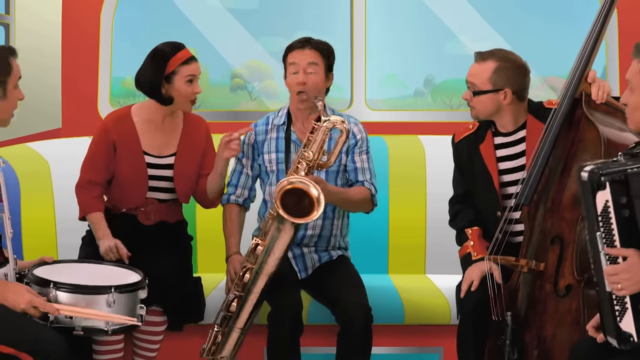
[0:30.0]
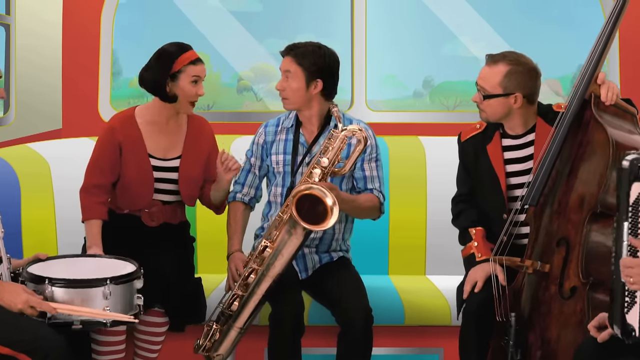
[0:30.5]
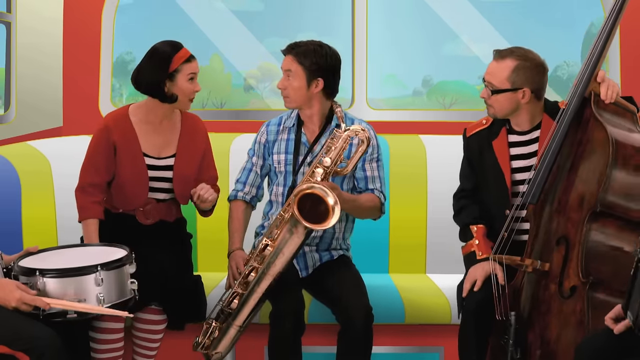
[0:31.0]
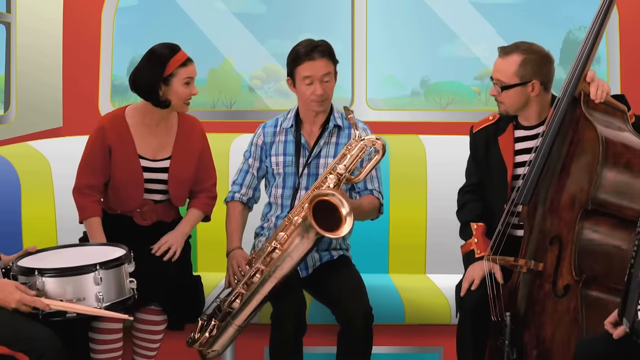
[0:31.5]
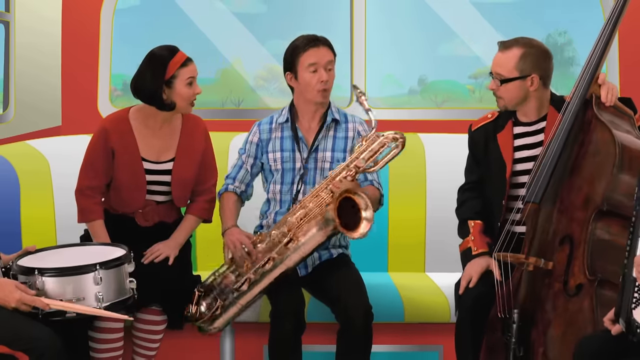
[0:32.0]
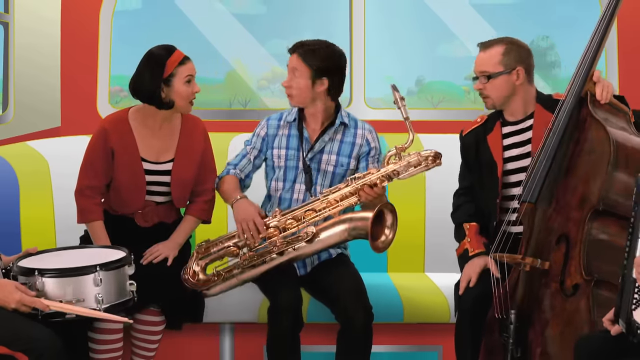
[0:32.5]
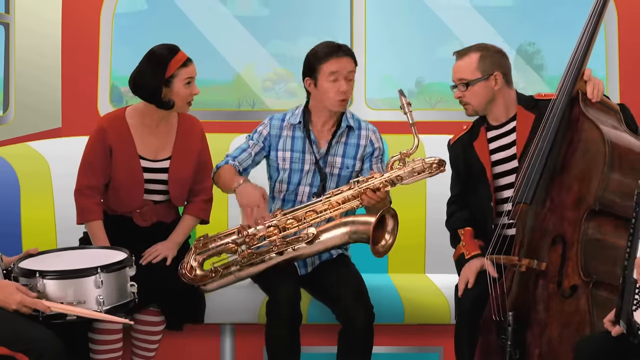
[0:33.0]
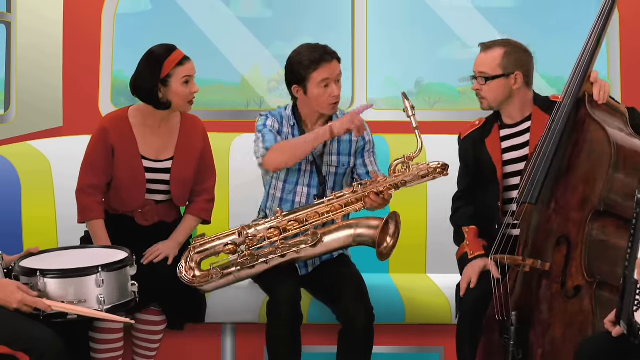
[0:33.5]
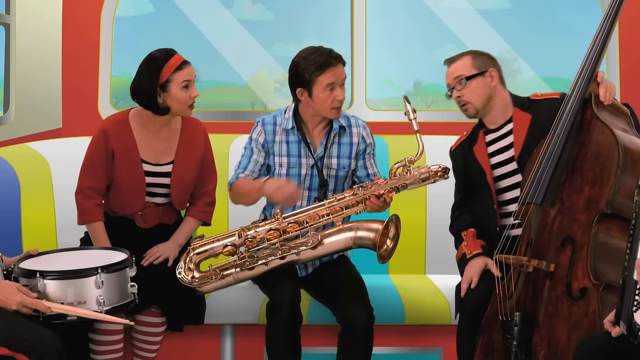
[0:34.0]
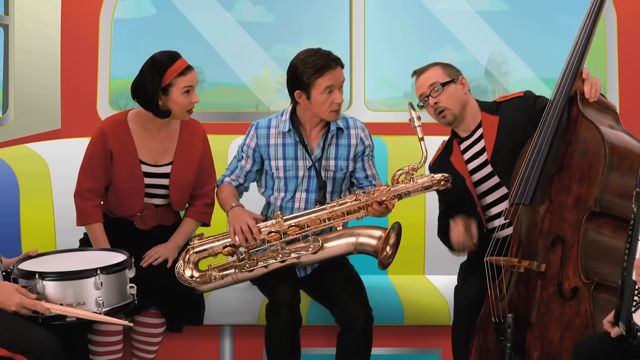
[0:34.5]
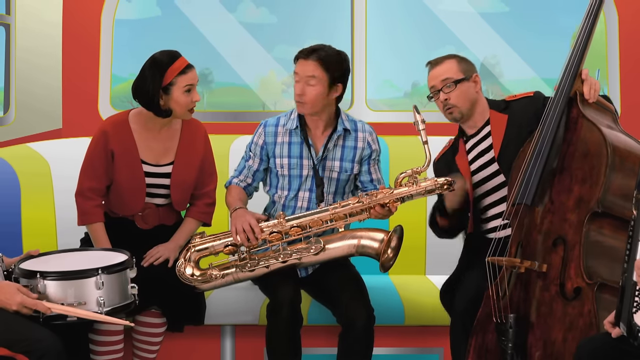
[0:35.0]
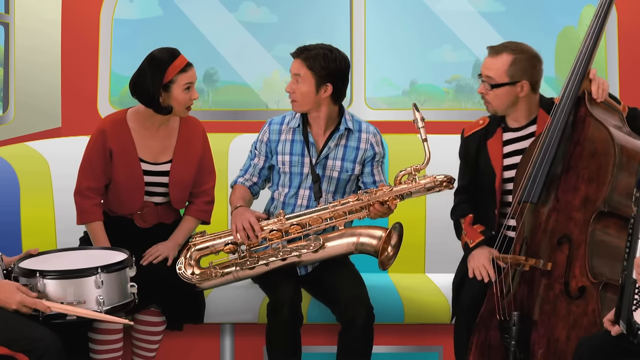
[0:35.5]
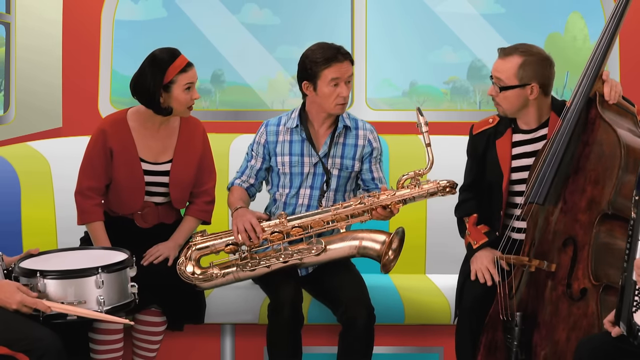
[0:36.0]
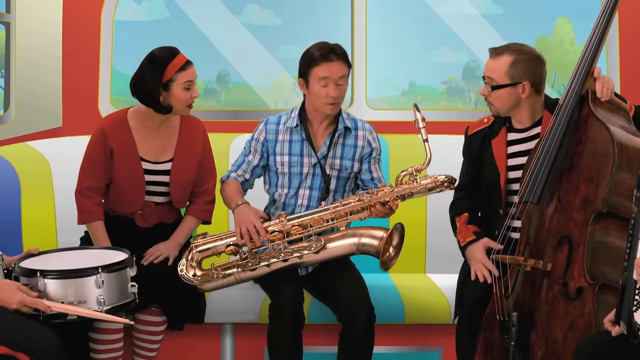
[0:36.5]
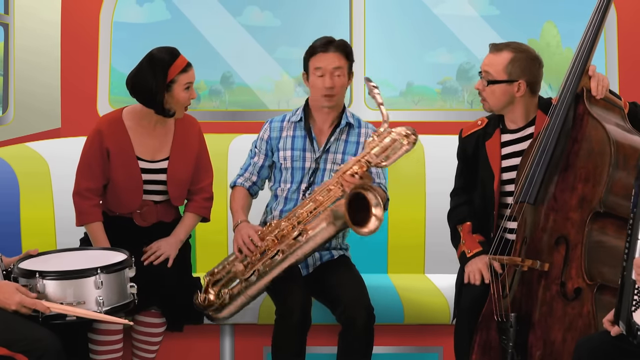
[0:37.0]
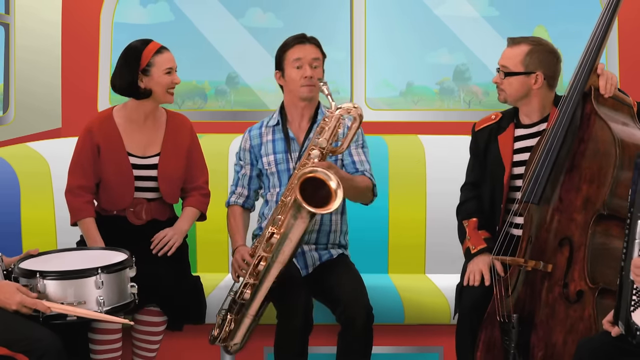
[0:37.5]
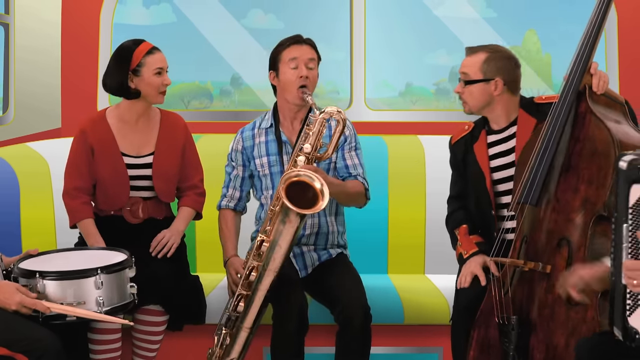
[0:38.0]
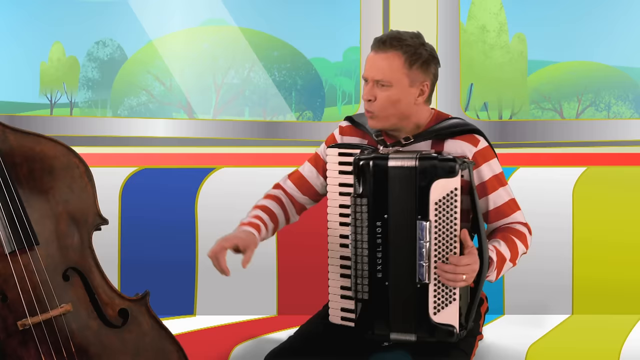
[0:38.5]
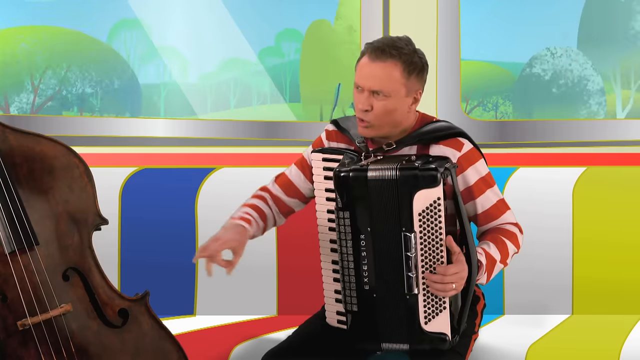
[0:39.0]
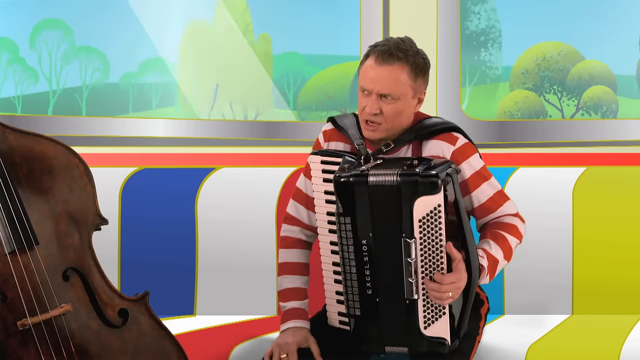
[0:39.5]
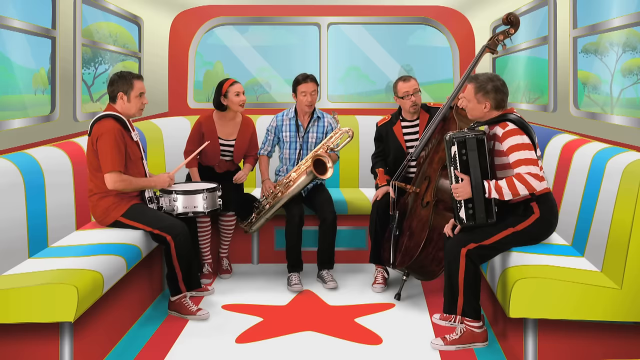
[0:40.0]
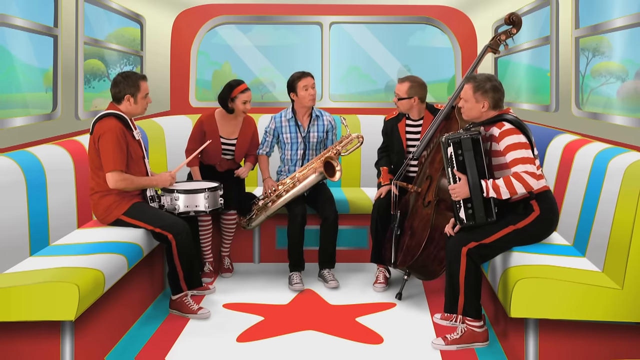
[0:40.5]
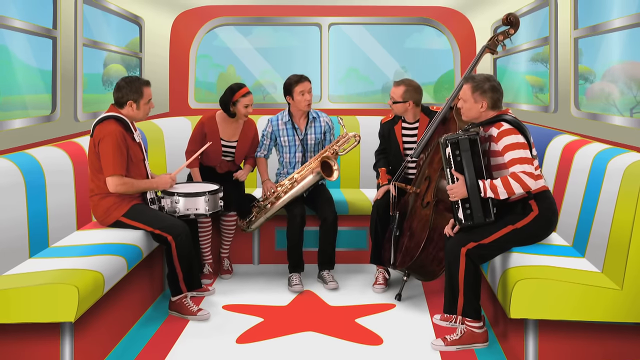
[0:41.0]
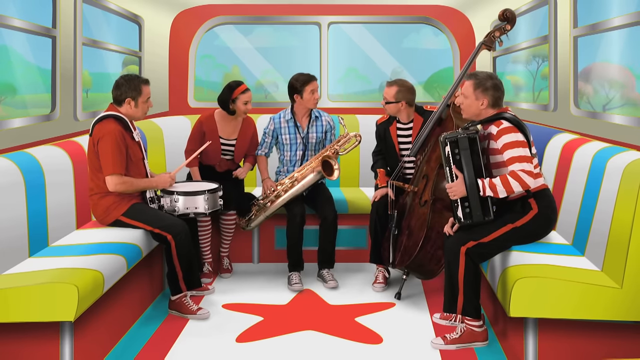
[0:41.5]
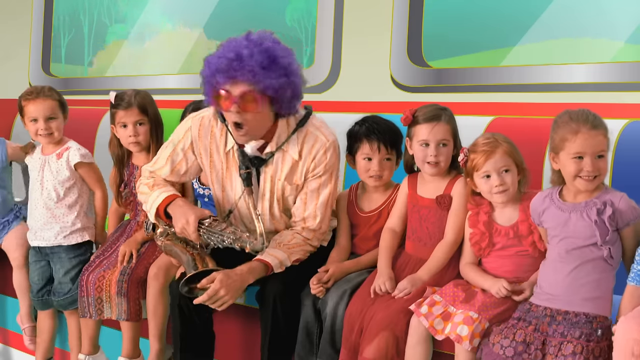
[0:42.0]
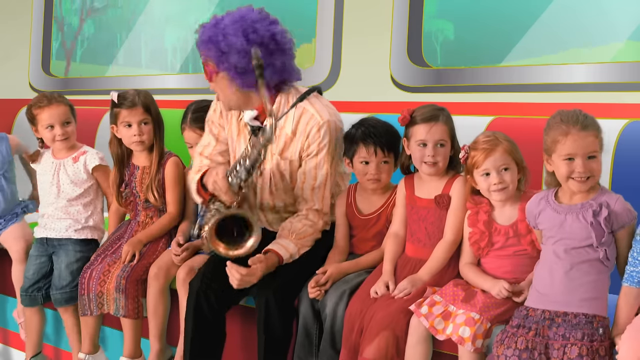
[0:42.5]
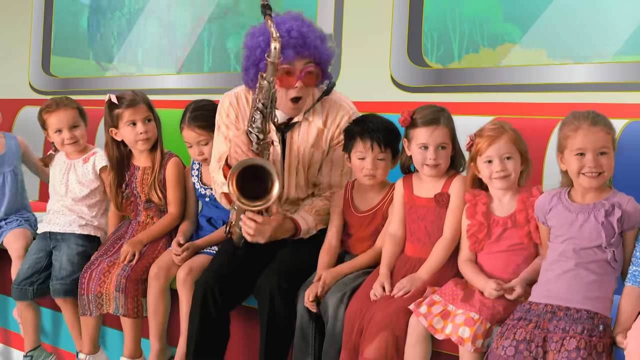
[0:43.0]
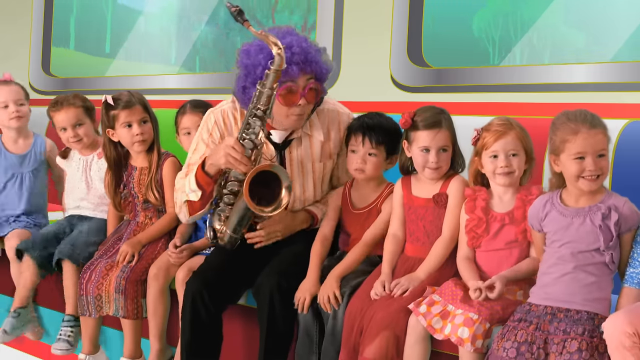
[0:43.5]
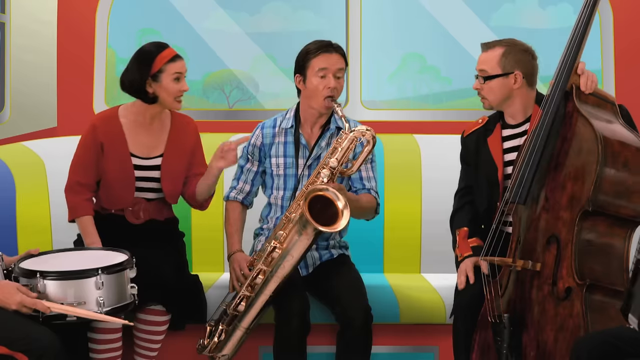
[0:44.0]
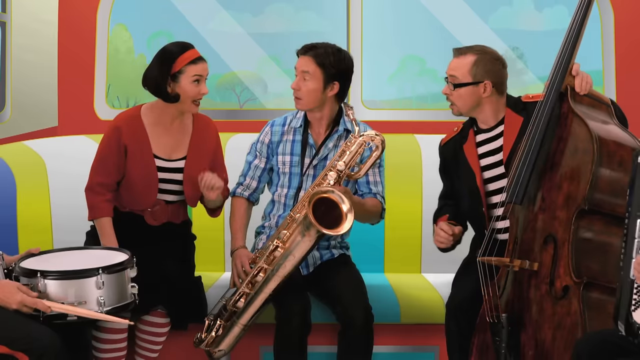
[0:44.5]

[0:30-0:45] The Lala band sits in the back of the bus, talking to the saxophone player in the blue shirt, while the saxophone player with the purple afro sits with the children. The saxophone player in the back keeps being interrupted as he tries to play and has not yet gotten to play; the mouthpiece is pointed at while the other band members keep talking to him. The children and the other saxophone player are kind of listening in and look kind of surprised, as if amazed at what is going on. The bus is still driving down the road. The band members all wear red Converse high tops. The group is very animated looking, with big expressions on their faces.